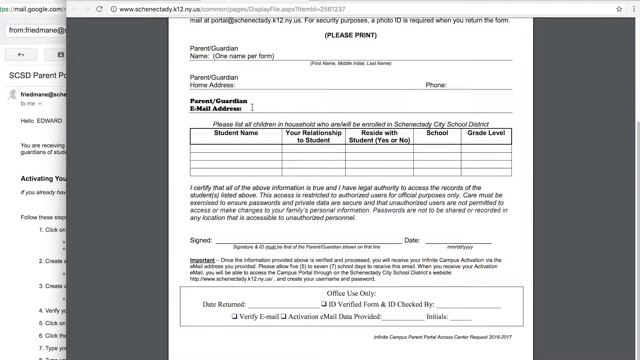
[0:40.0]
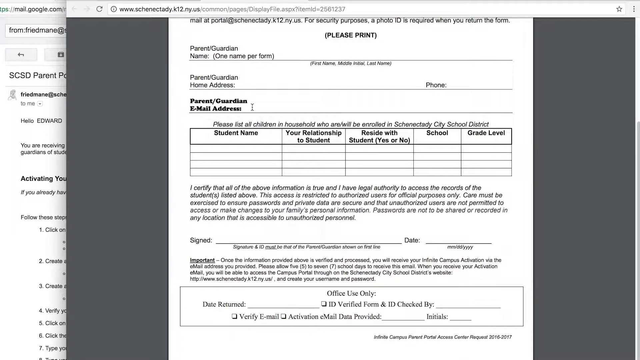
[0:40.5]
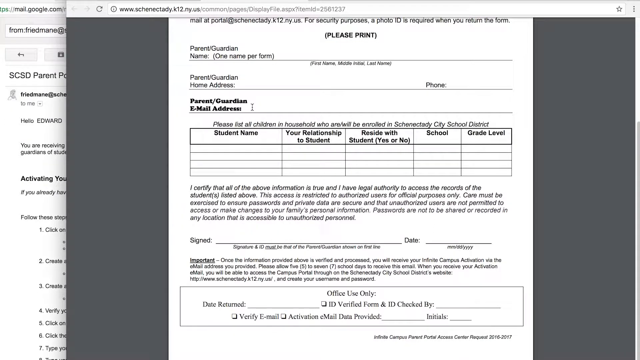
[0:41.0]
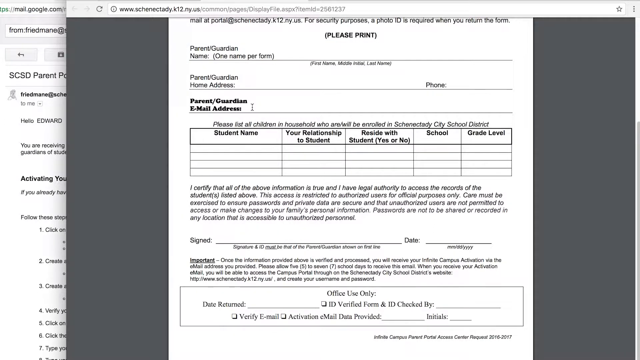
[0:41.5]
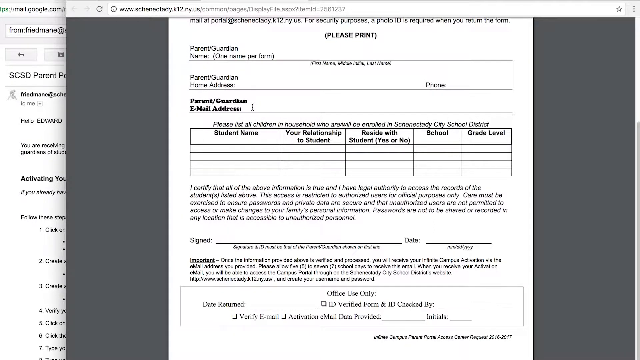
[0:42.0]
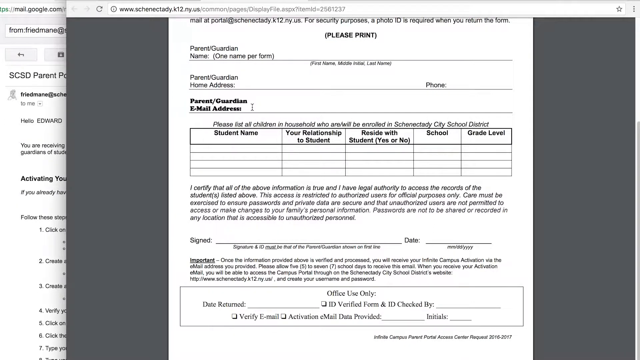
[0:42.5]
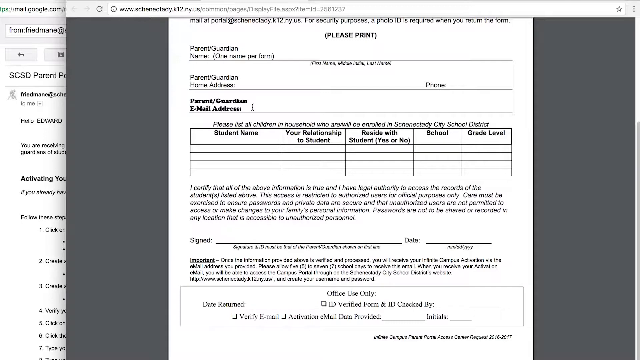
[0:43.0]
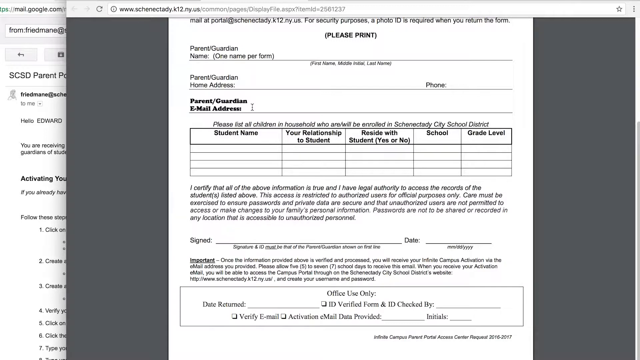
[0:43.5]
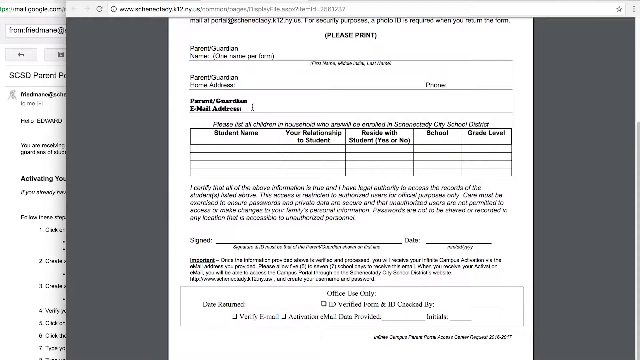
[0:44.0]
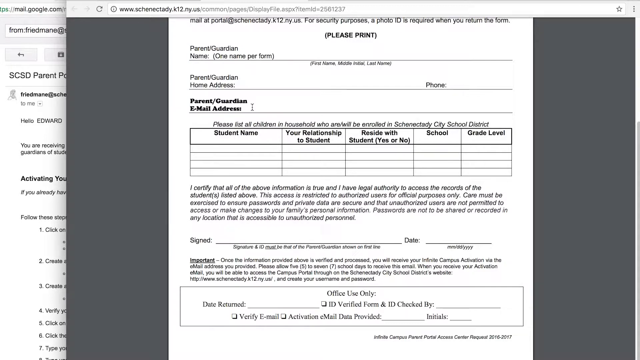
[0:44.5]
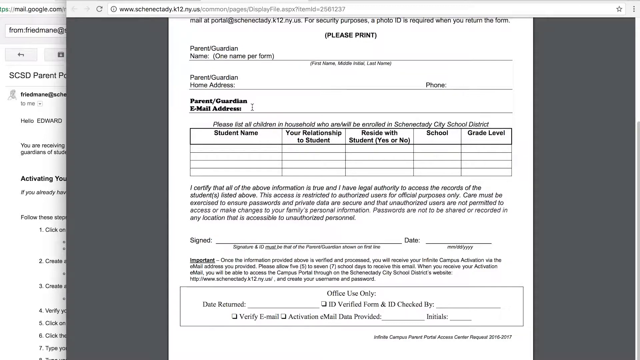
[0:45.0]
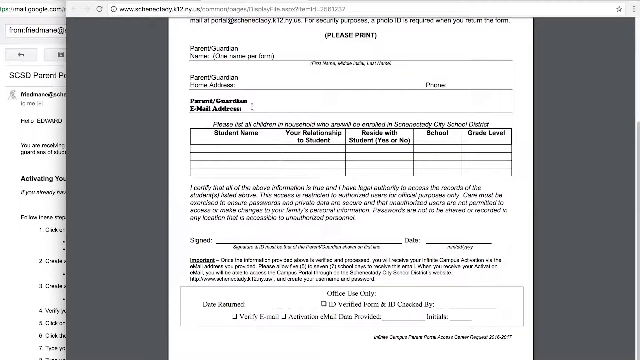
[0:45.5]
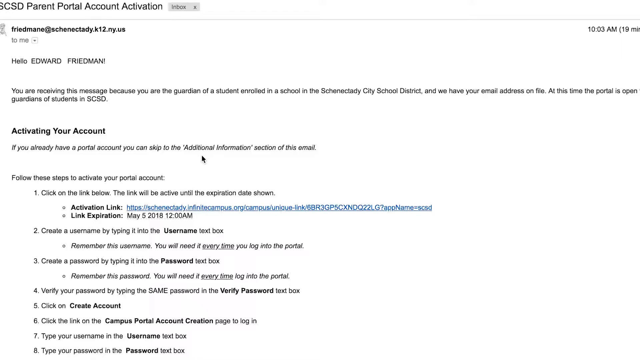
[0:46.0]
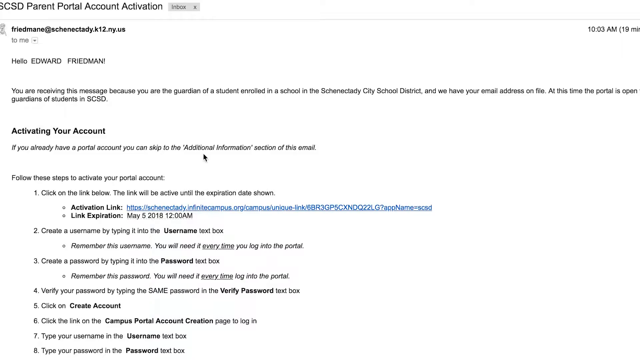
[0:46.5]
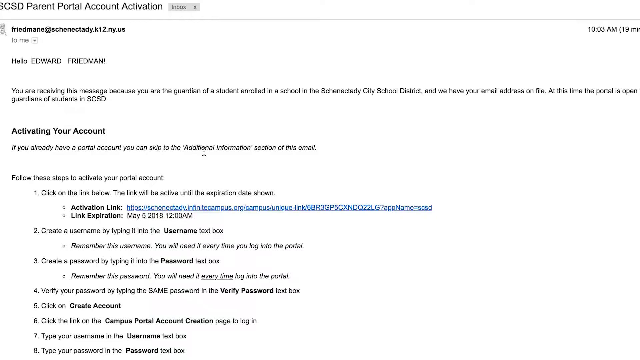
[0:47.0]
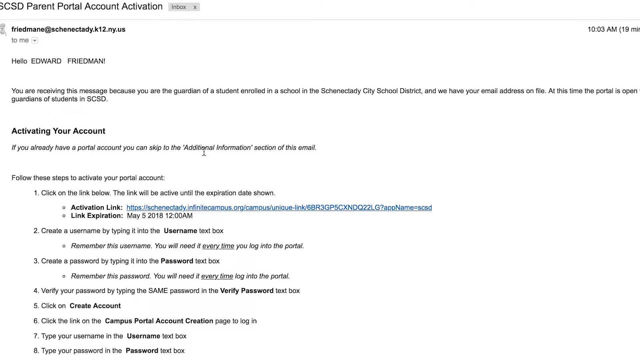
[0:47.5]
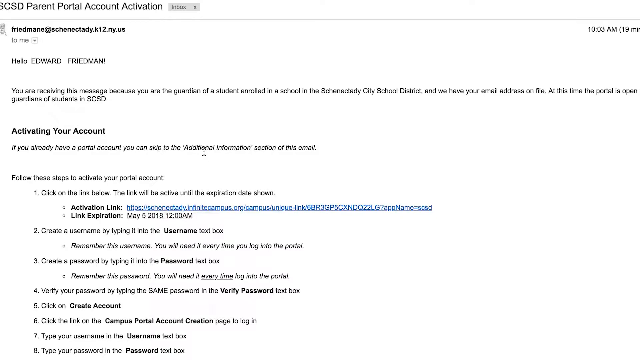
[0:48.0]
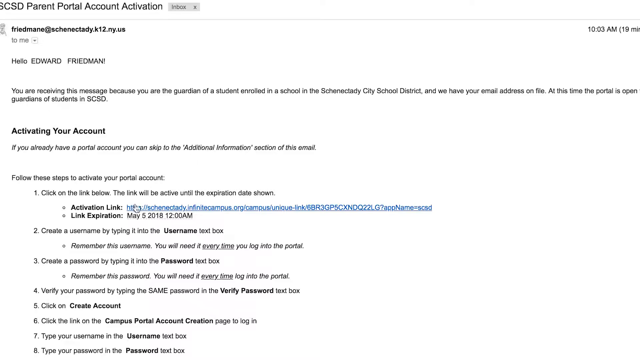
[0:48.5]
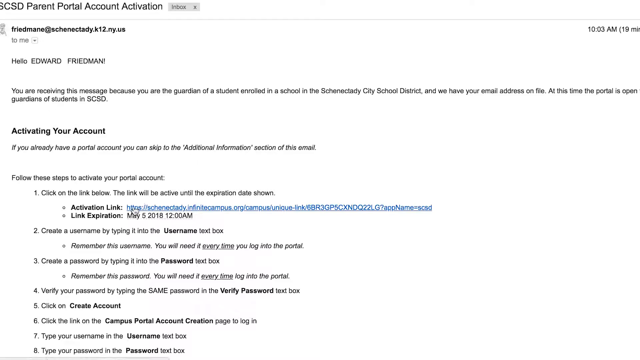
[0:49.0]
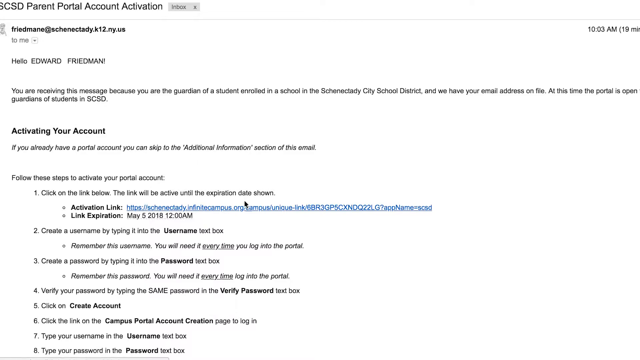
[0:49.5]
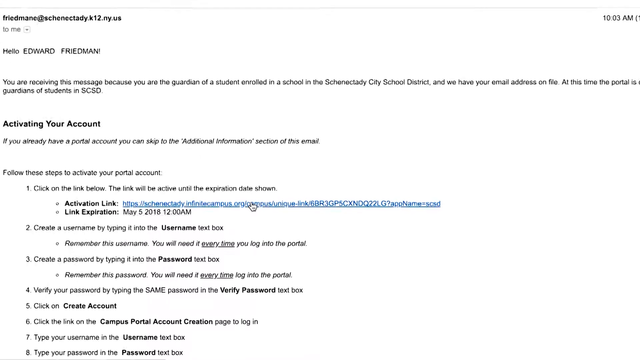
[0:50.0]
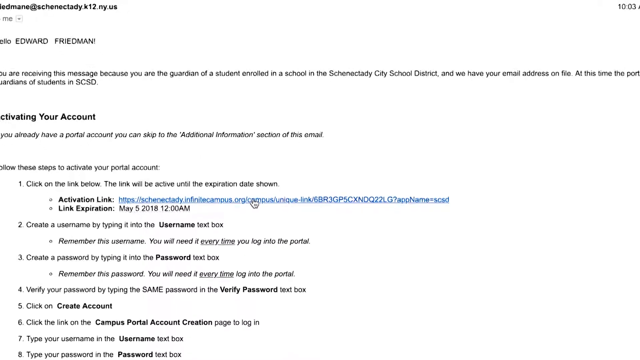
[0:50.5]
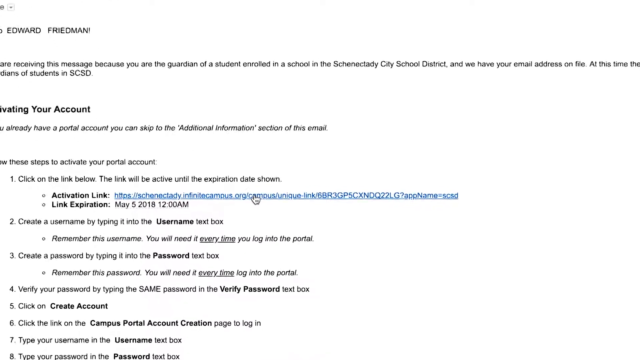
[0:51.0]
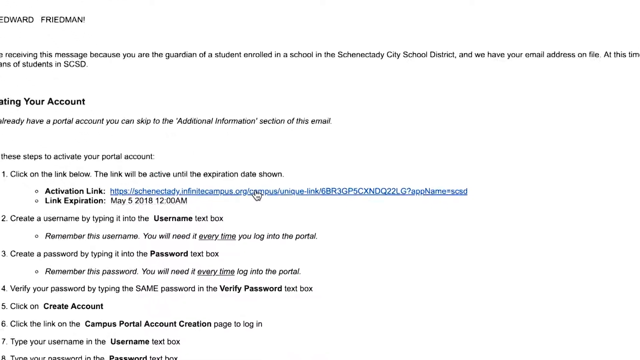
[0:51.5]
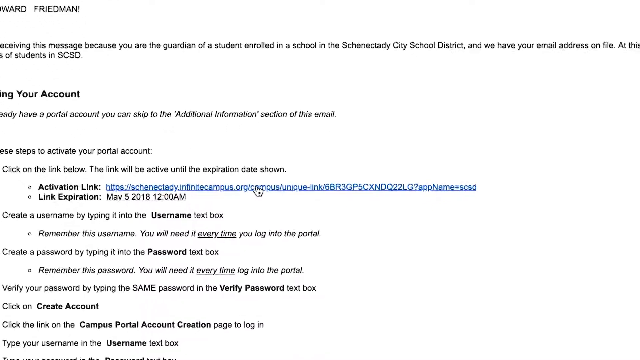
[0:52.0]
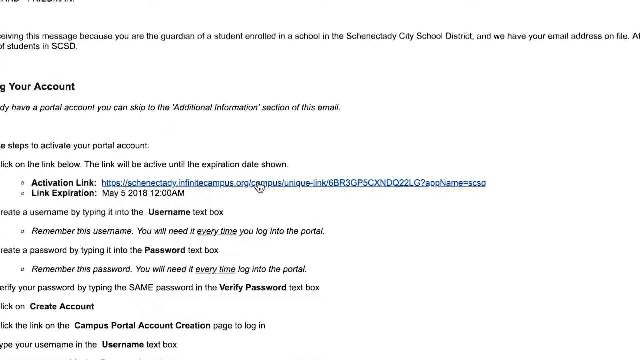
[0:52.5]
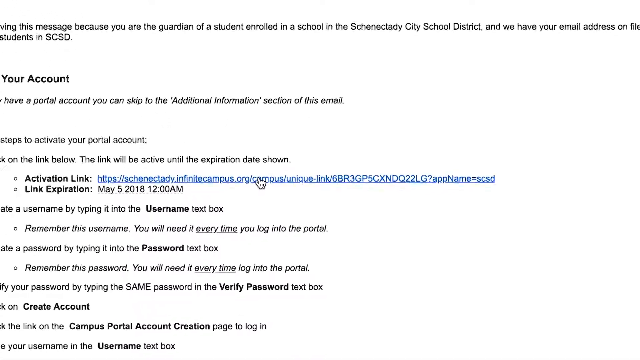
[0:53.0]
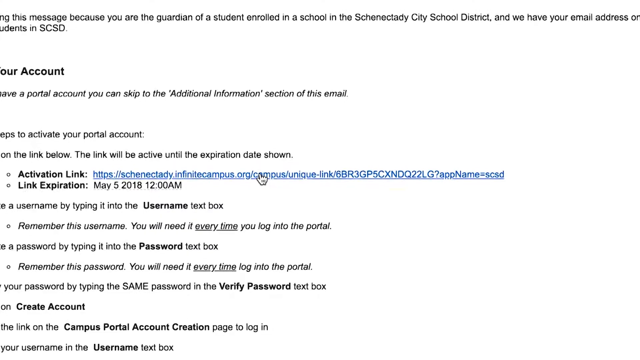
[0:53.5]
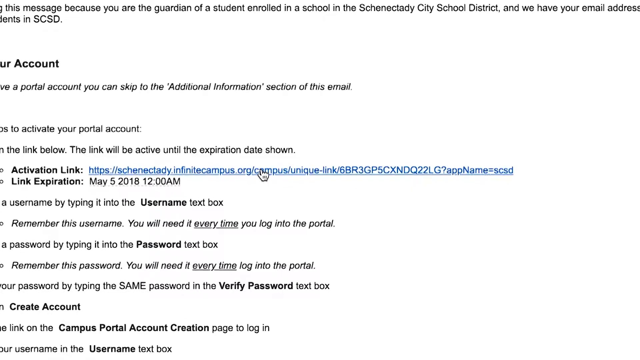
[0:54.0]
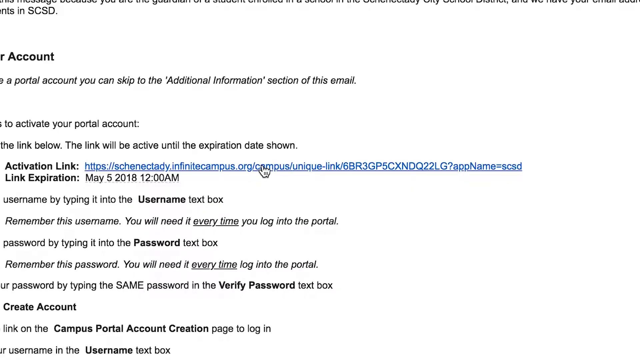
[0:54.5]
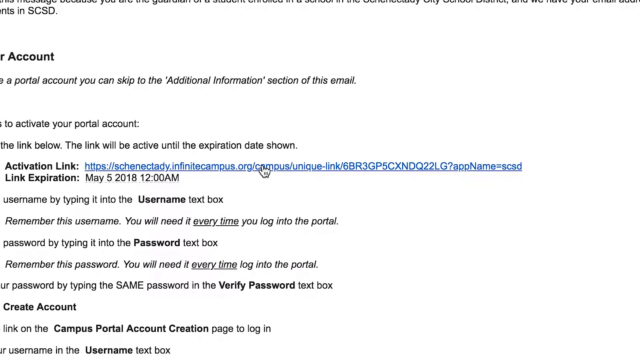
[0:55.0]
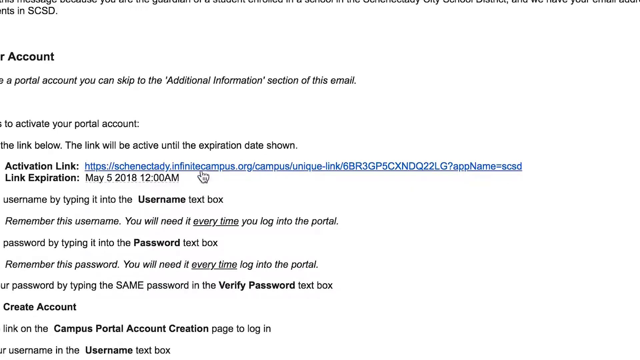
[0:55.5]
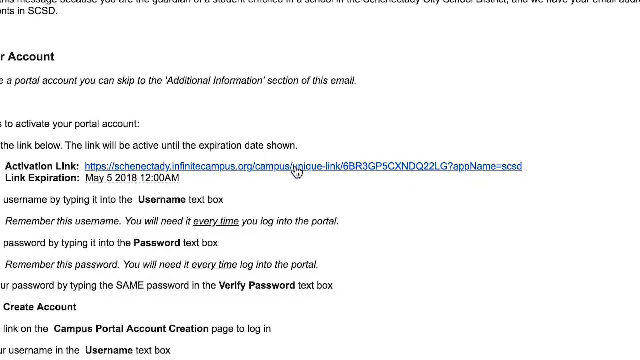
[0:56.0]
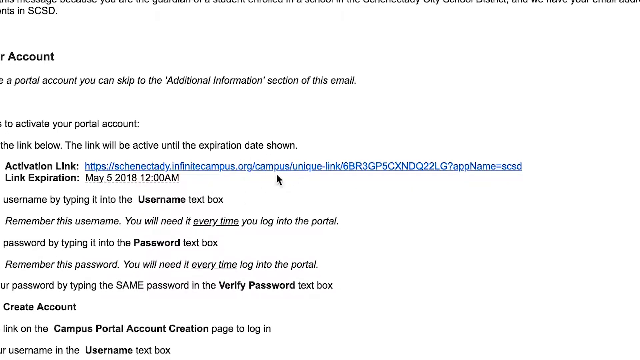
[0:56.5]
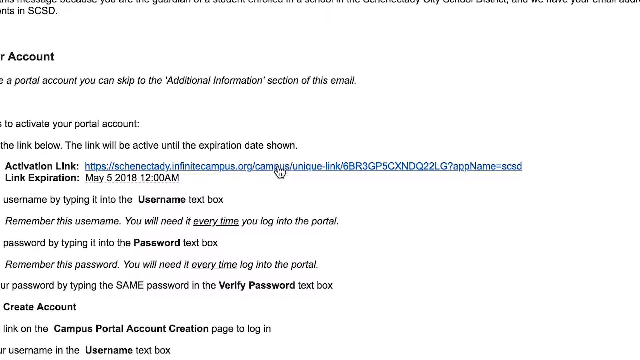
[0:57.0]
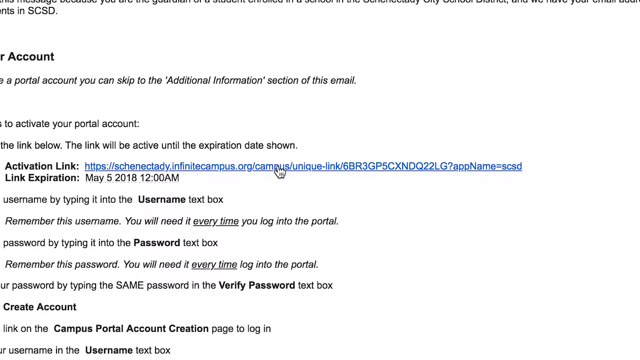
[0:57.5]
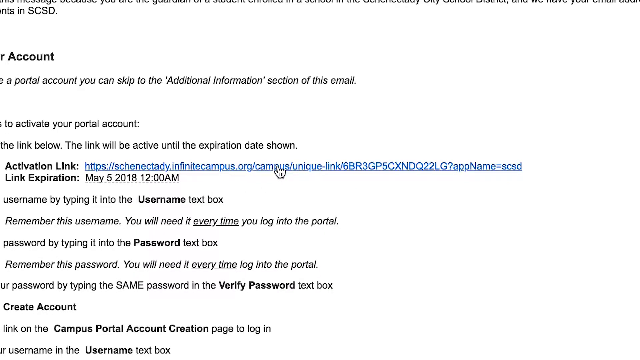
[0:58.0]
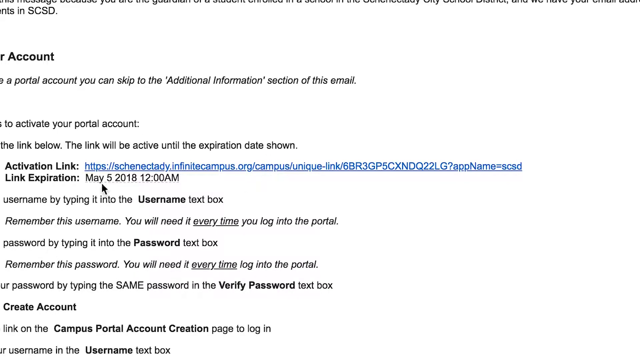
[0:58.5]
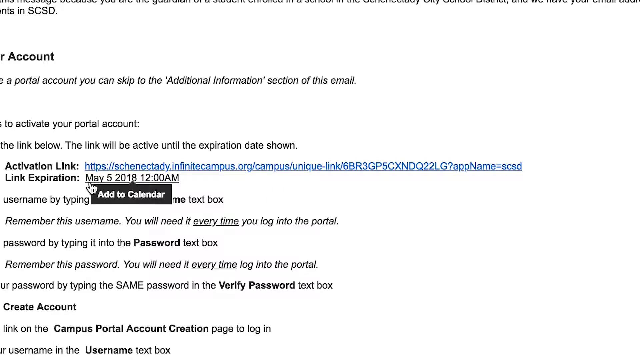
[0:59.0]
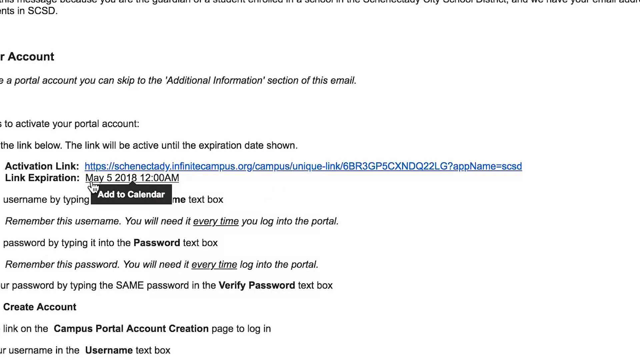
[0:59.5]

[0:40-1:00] A computer screen shows a tab open in the center, with gray on the left and right sides. A form is on the screen. At the top it says "parents/guardian," with "one name per form" in parentheses below. Below that it says "parents/guardian" and "home address," with "phone number" to the right, and there is a line underneath each. Below this is "parents/guardian email address," followed by fields for student name, "your relationship" to the student, school beside that, and grade level beside that. On the line to the right of "parents/guardian email address" is the mouse pointer as a vertical bar, just sitting there. There is a lot of information below, which reads "I certify that all the above" and more. The view then switches to a zoomed-in version. Toward the bottom middle on the left it says "click on the link below. The link will be active until the expiration date." Below that it says "active link," with a blue link to the right. The mouse pointer goes over the link and the view zooms in on it; the pointer circles the part of the link that says "campus." Below that it says "May 5th, 2018," and the pointer goes underneath that.